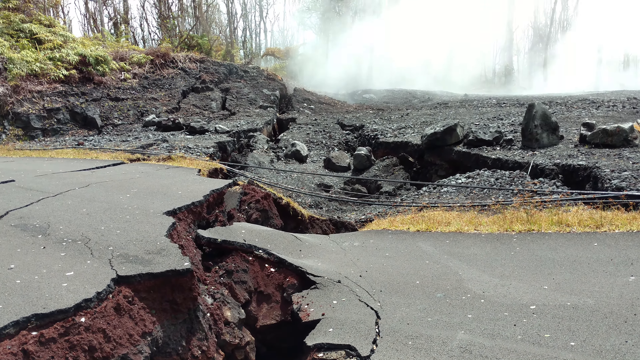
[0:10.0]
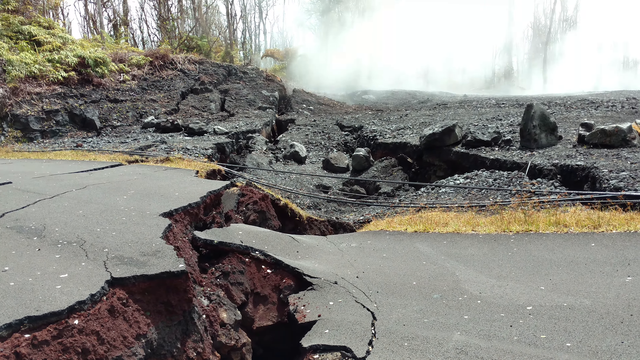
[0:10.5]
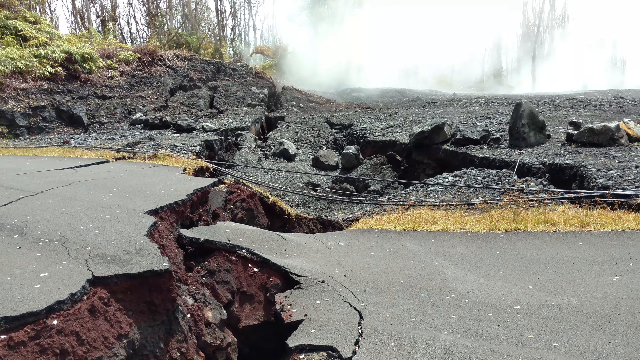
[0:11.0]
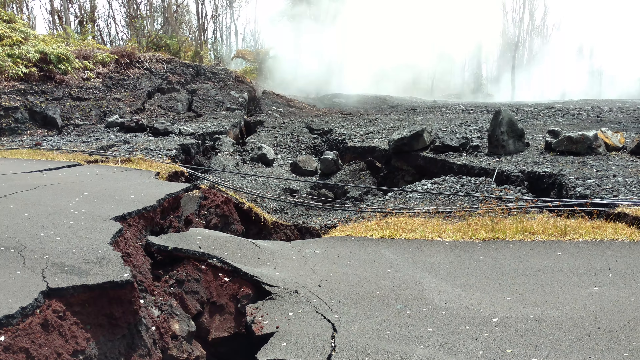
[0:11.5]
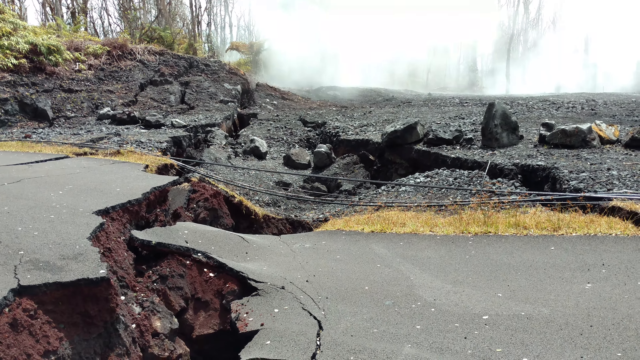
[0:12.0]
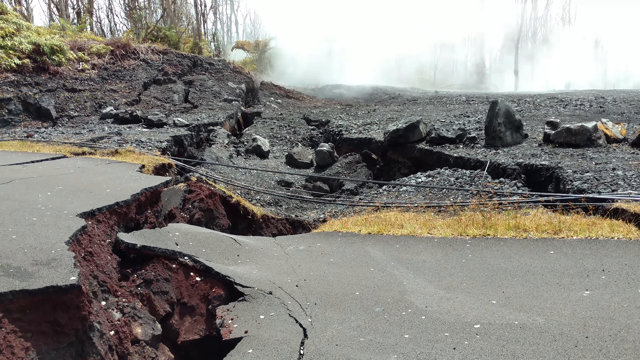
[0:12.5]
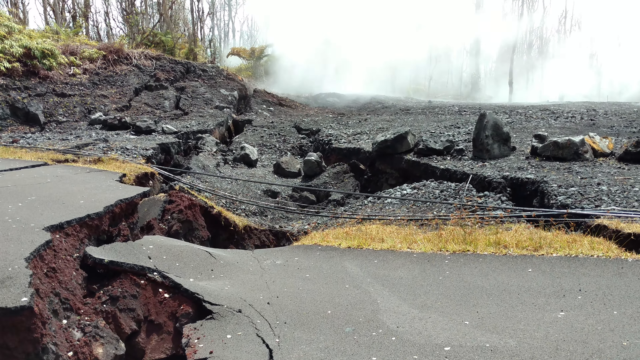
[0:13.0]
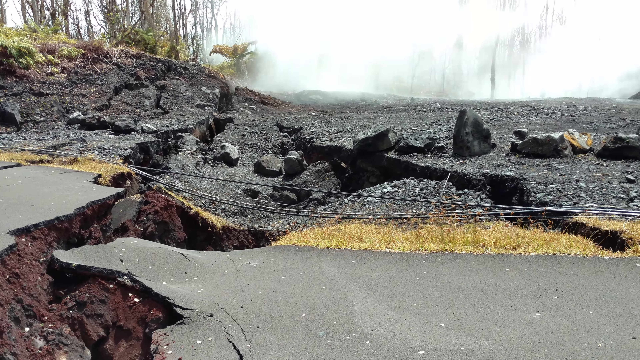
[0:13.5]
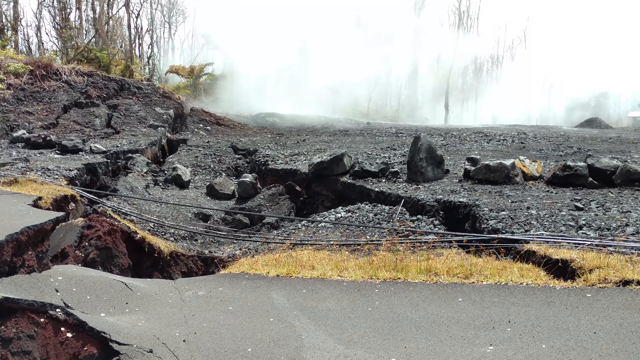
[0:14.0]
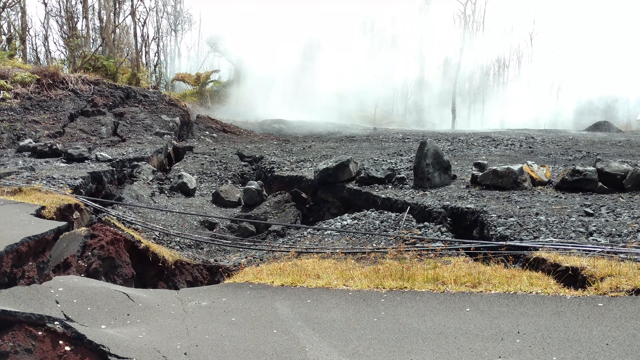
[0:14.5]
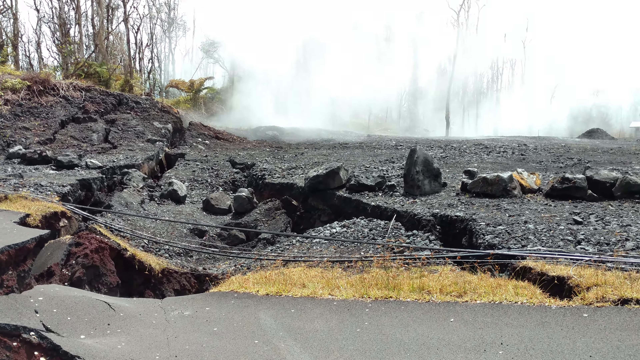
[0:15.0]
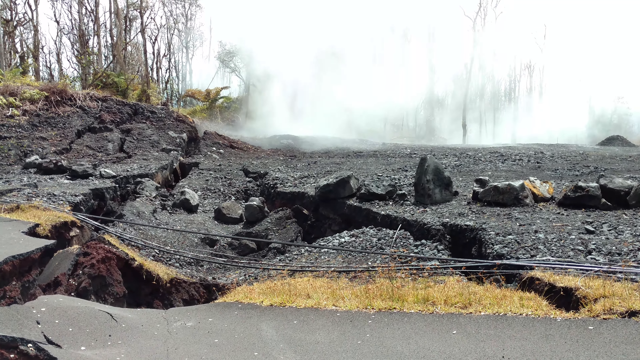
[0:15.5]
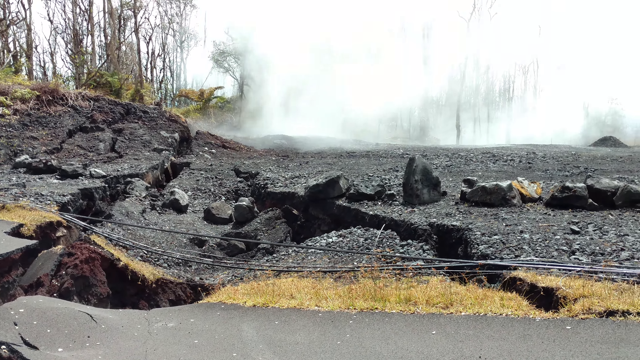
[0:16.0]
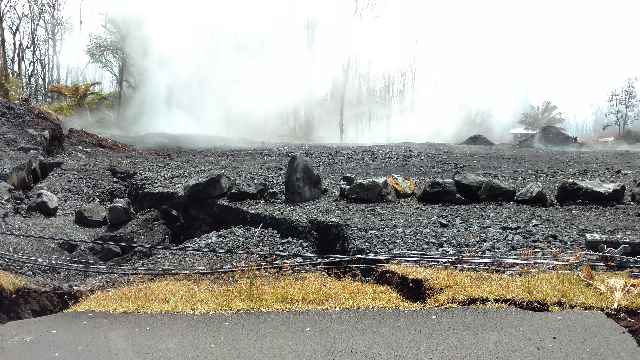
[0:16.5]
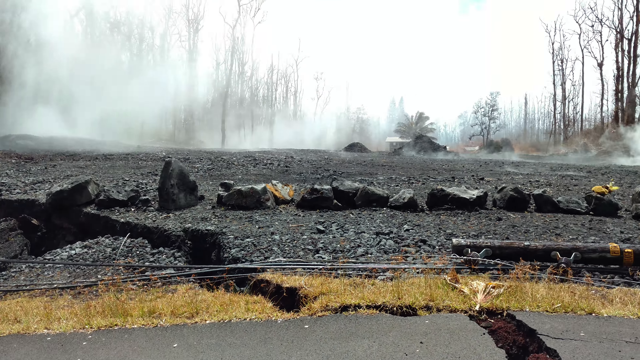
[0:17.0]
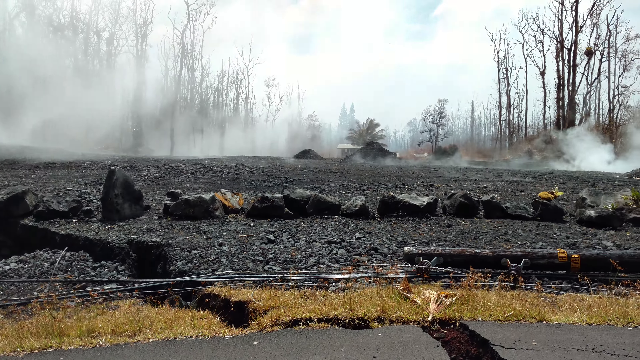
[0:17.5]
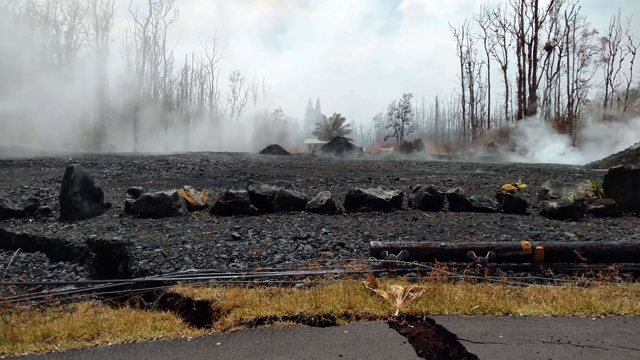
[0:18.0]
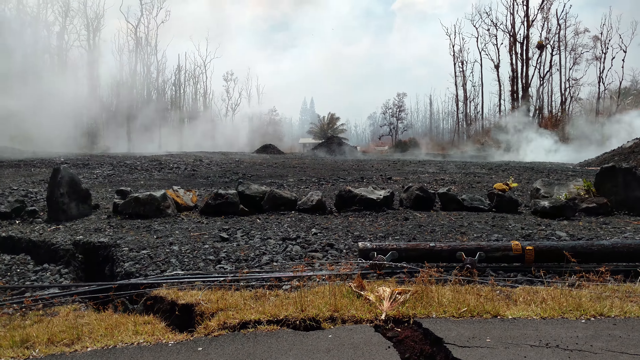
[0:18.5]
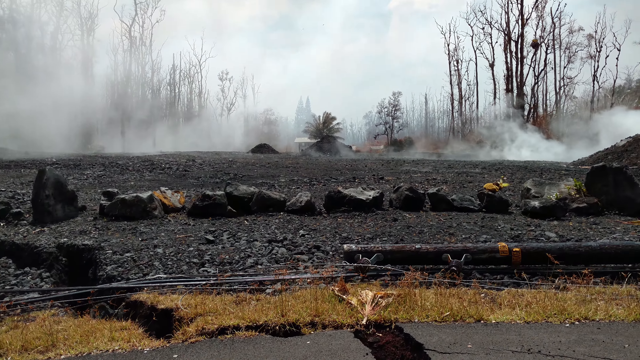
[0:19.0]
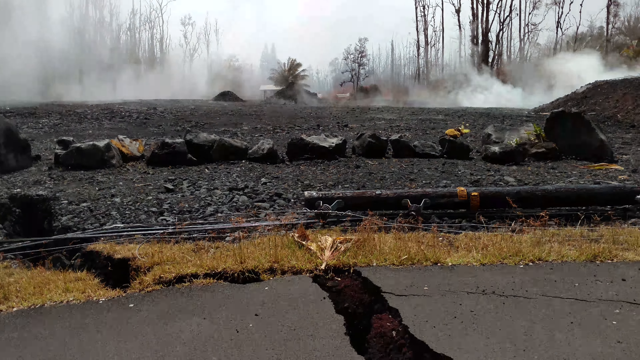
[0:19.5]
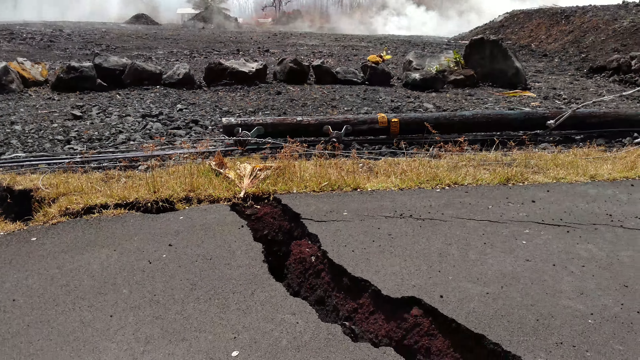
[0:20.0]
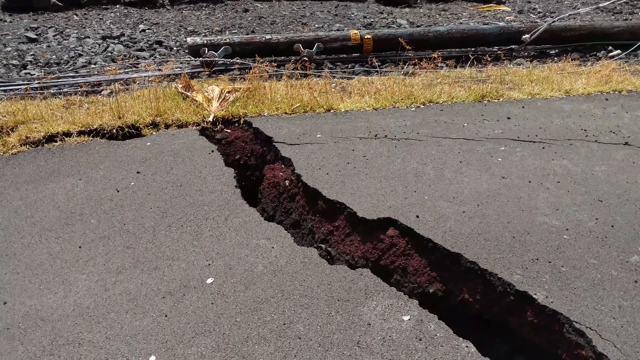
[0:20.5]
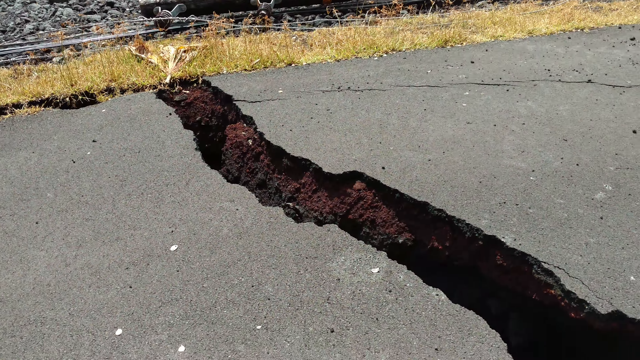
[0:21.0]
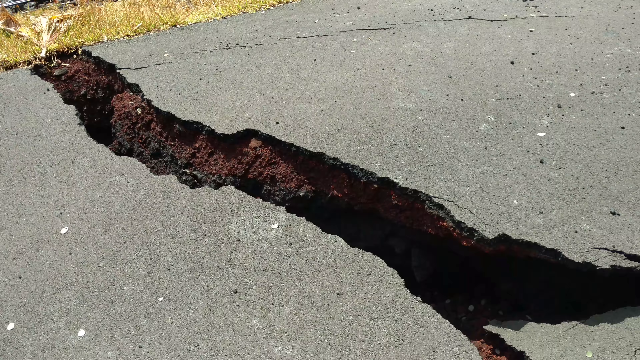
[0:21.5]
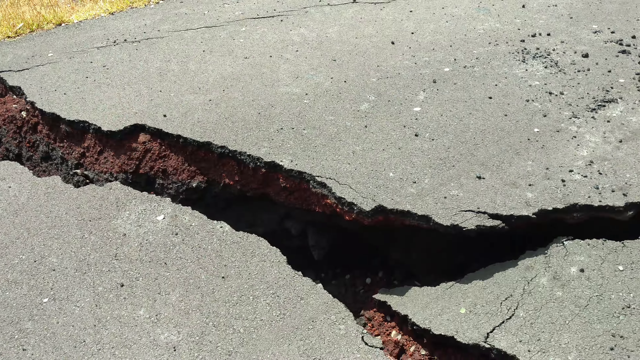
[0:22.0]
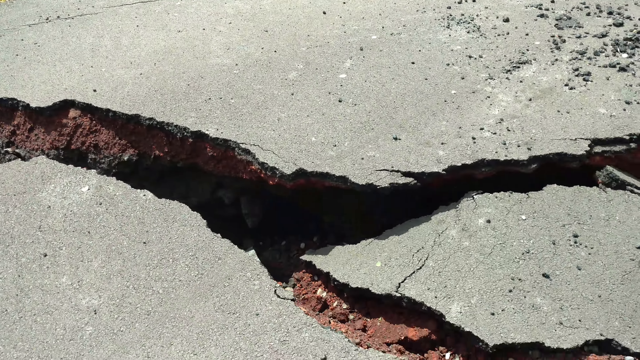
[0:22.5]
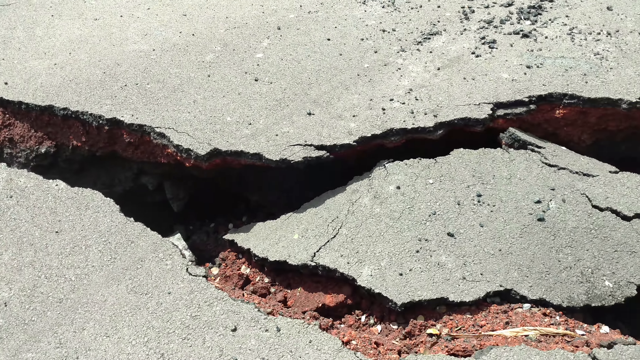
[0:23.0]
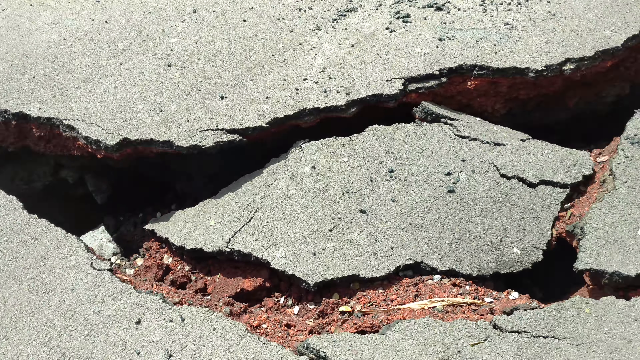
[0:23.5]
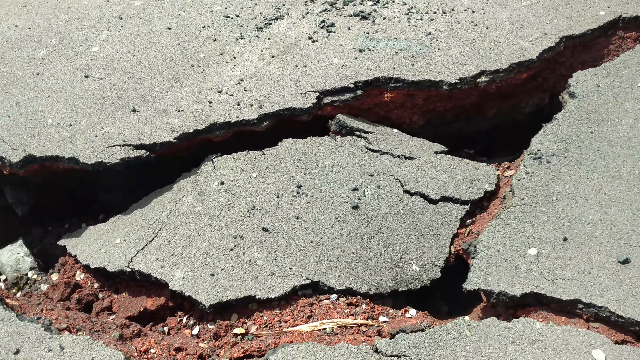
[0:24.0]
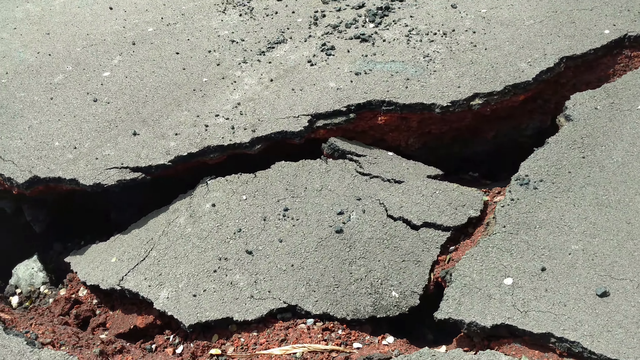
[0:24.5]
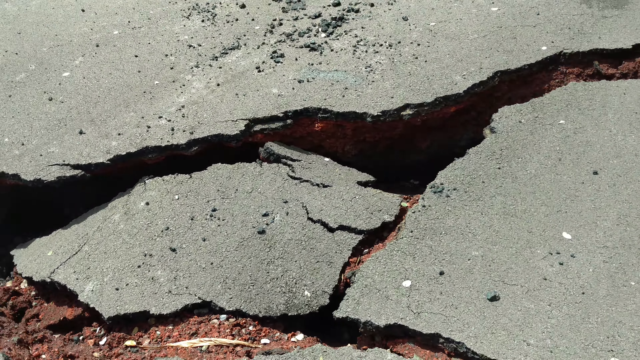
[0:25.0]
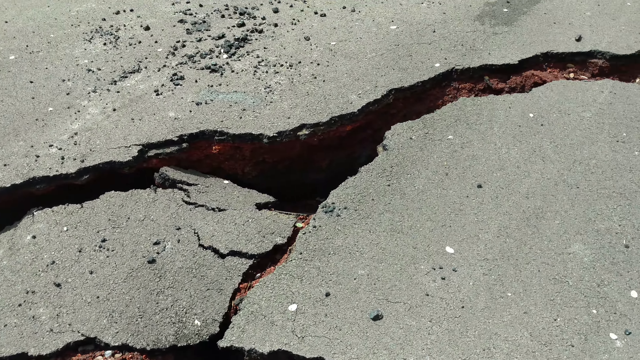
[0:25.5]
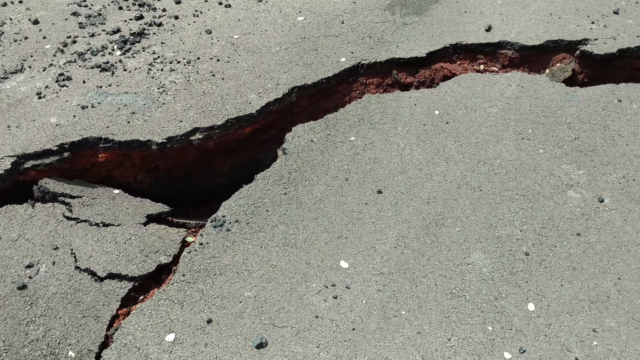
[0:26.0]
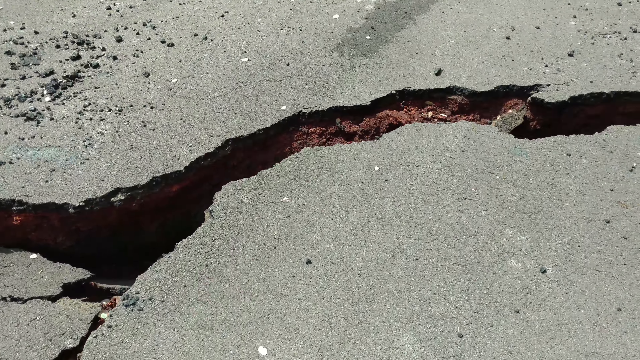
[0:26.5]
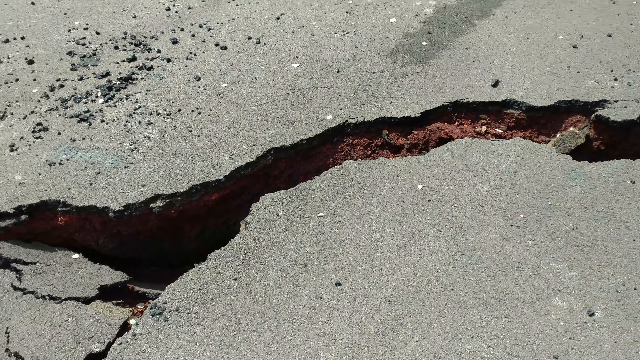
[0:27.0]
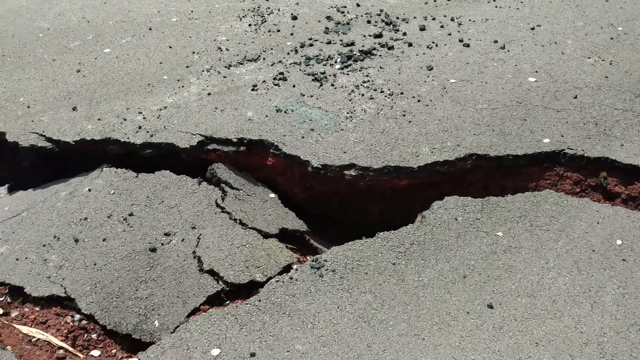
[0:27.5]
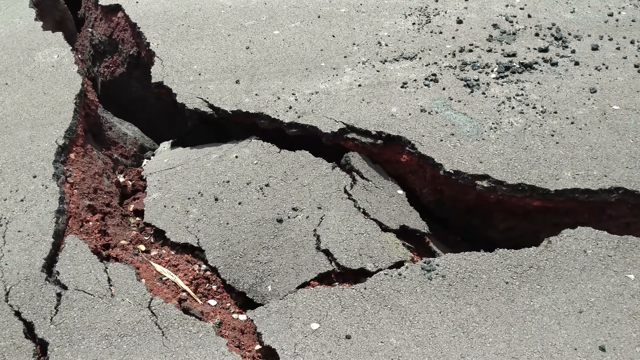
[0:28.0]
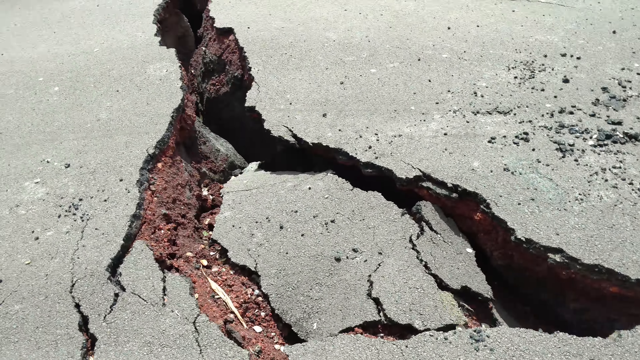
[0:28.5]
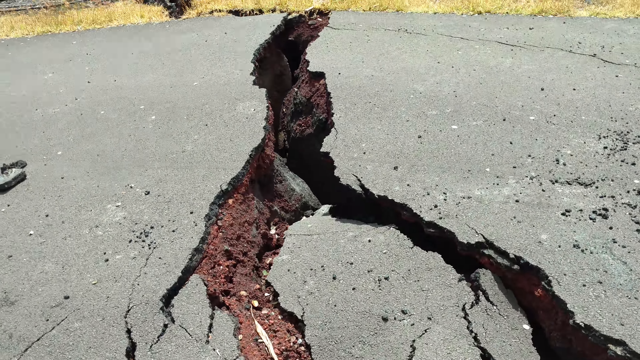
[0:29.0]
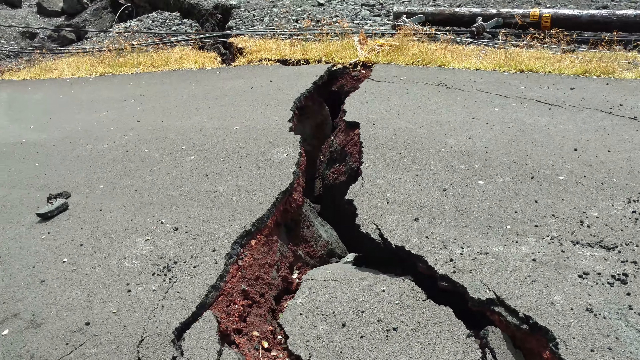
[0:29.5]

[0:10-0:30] The scene seems to show an eroded or damaged area. On the far end there is a lot of dry soil that is damaged and cracked. What looks like mist or smoke fills the background so thickly that nothing past it is visible, though trees can slightly be seen in the background. There are a lot of huge rocks in the foreground. As the camera moves toward the right, more mist or smoke is seen flowing through the area. The camera then focuses on the side of the road, where there are huge cracks in the ground. The road is so damaged that there are huge spaces between its two sides, wide enough that another rock could basically fit into the cracks.